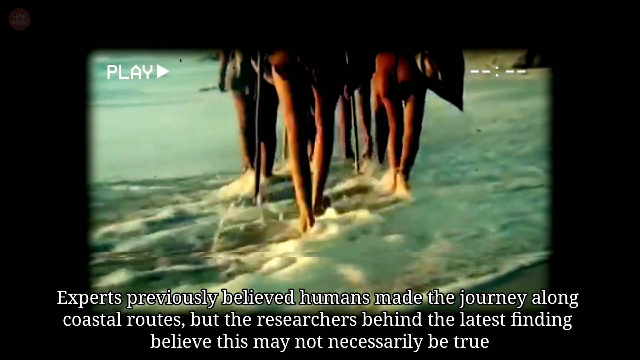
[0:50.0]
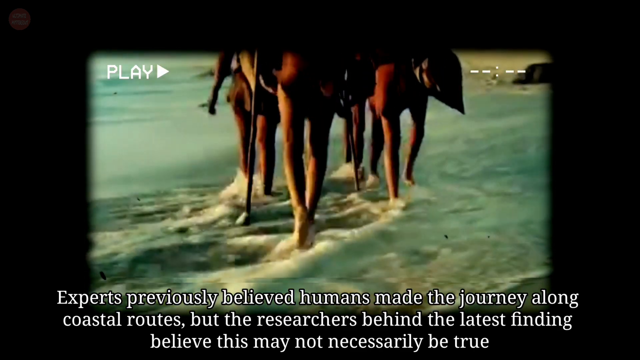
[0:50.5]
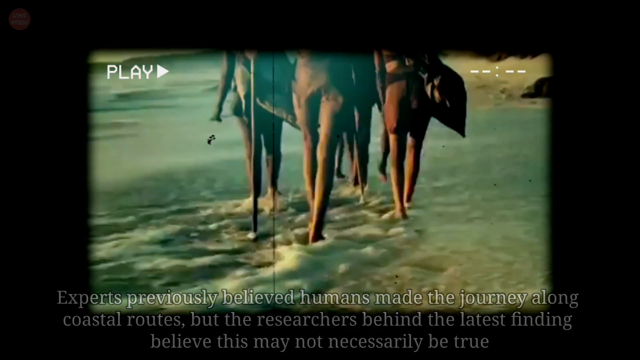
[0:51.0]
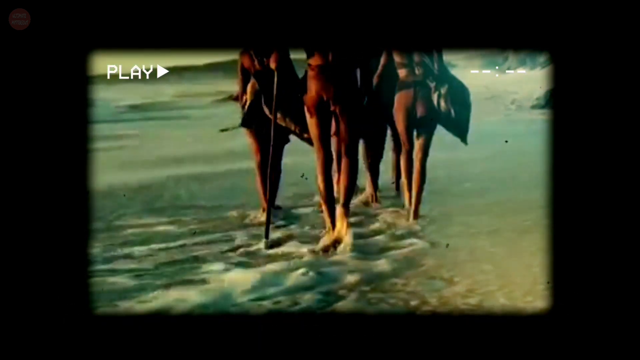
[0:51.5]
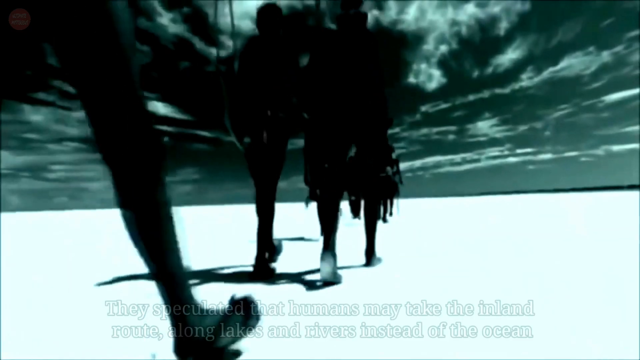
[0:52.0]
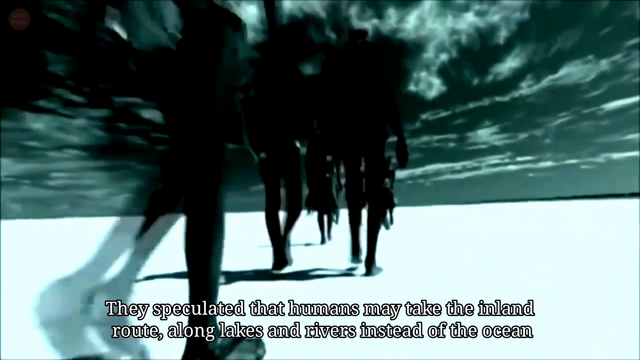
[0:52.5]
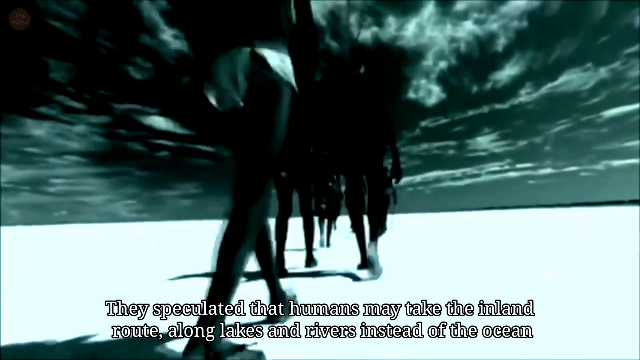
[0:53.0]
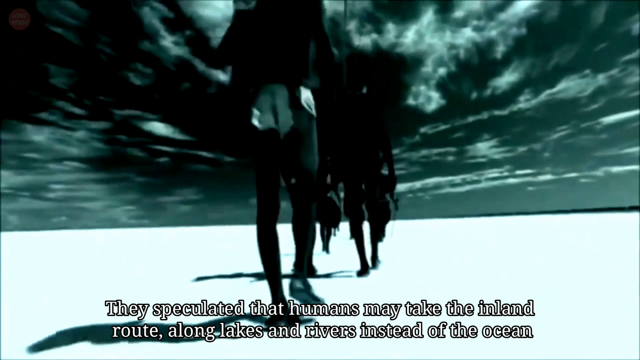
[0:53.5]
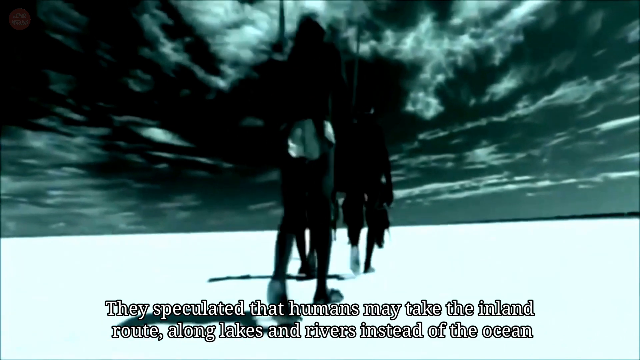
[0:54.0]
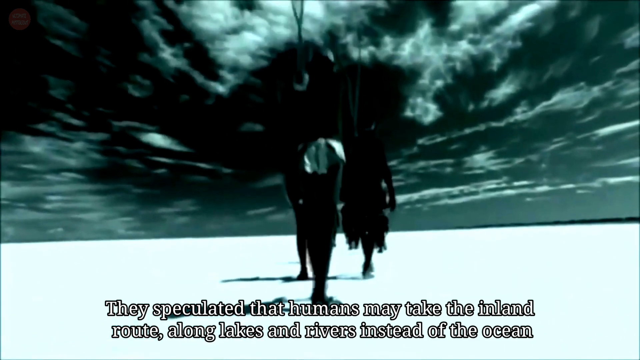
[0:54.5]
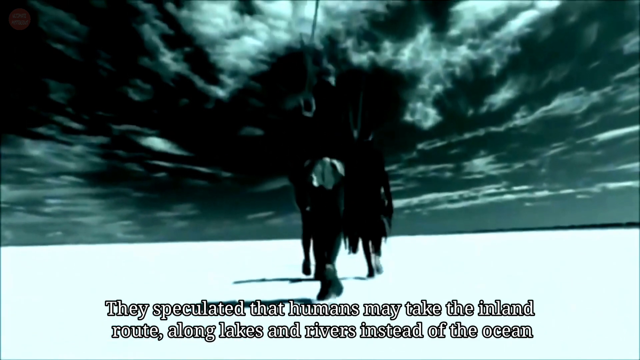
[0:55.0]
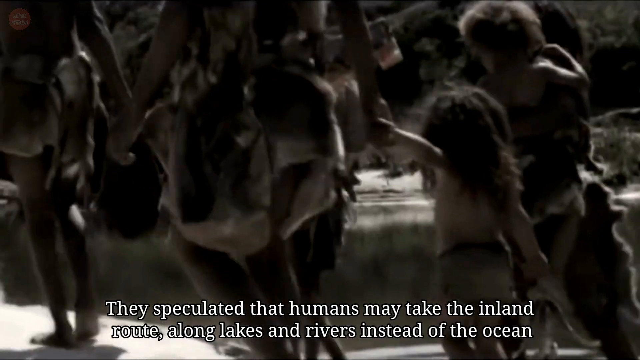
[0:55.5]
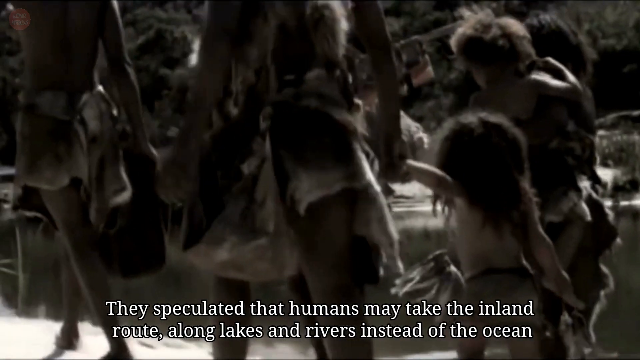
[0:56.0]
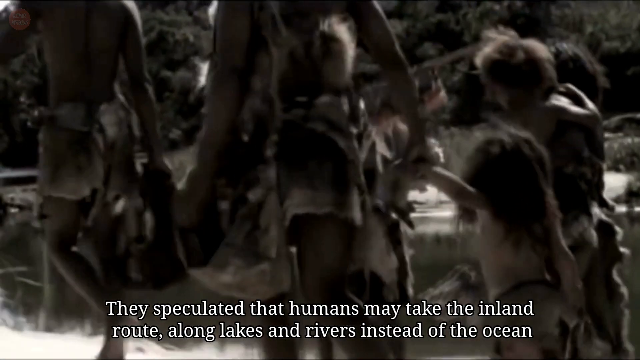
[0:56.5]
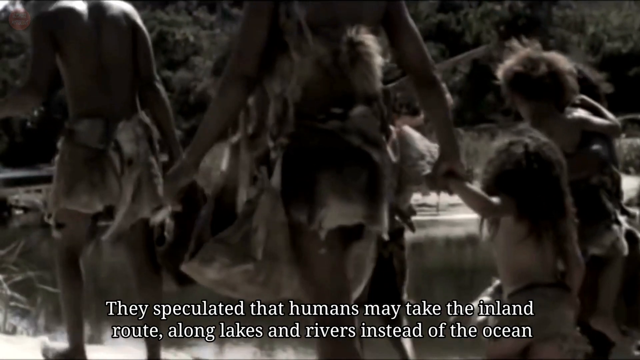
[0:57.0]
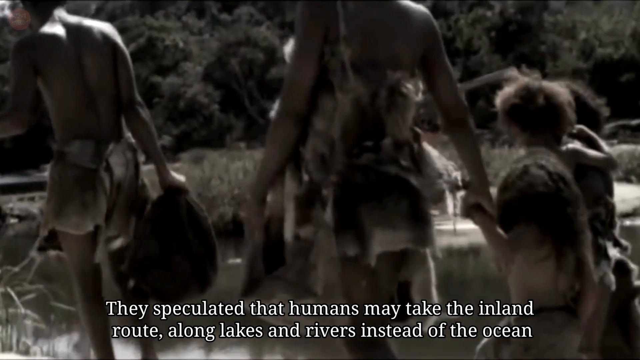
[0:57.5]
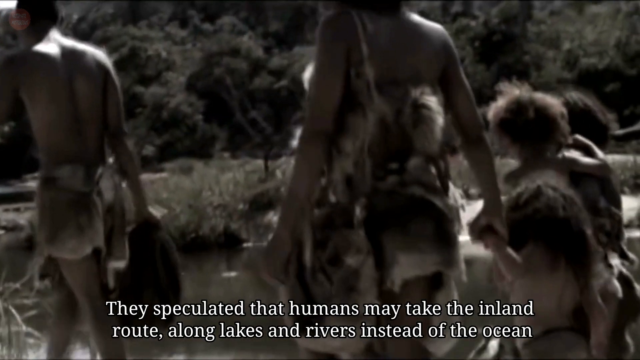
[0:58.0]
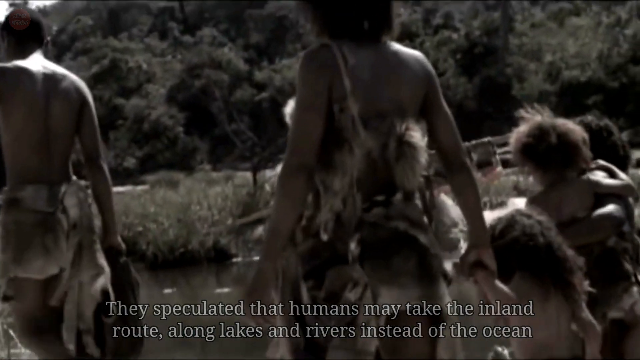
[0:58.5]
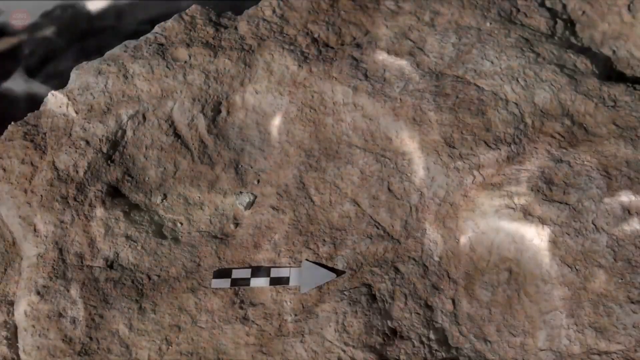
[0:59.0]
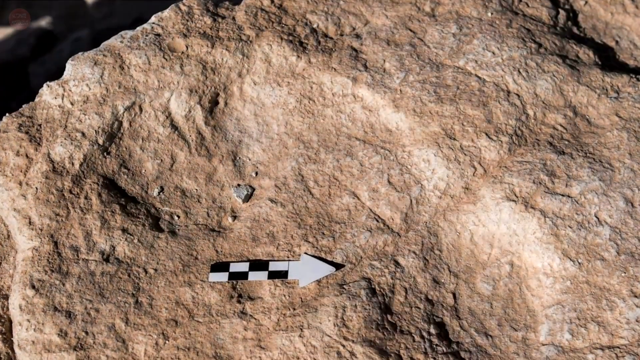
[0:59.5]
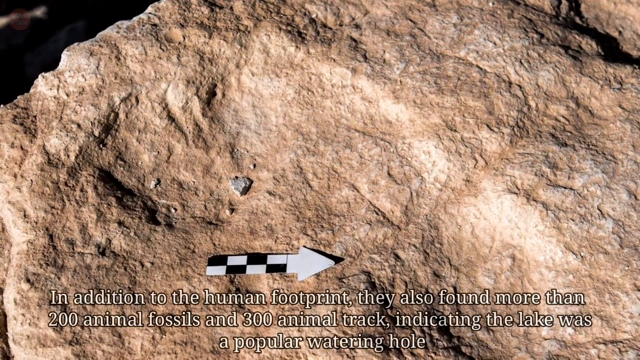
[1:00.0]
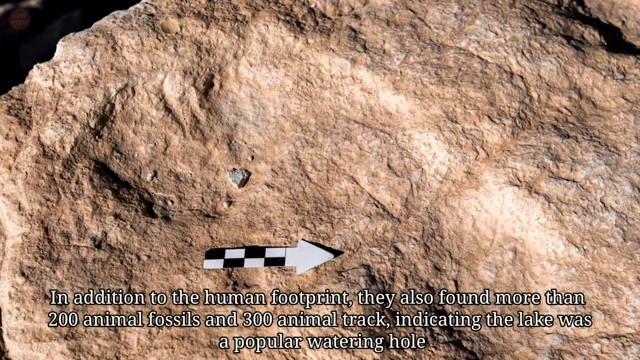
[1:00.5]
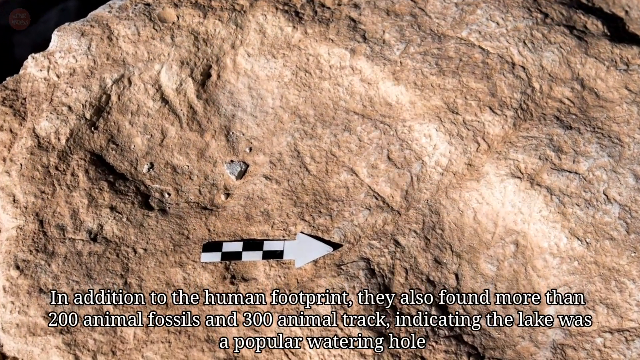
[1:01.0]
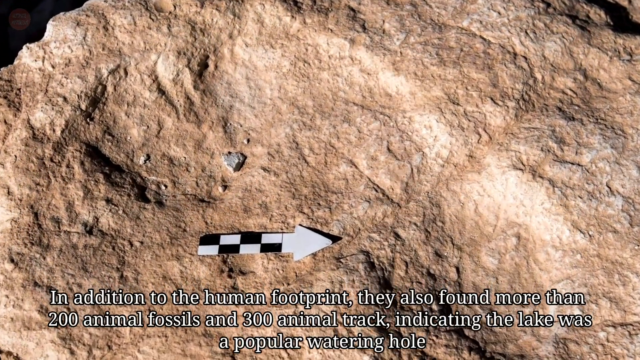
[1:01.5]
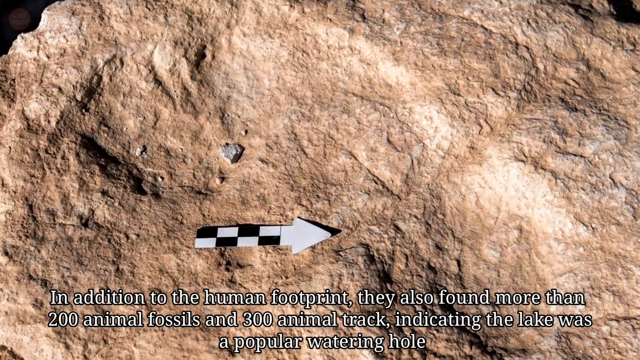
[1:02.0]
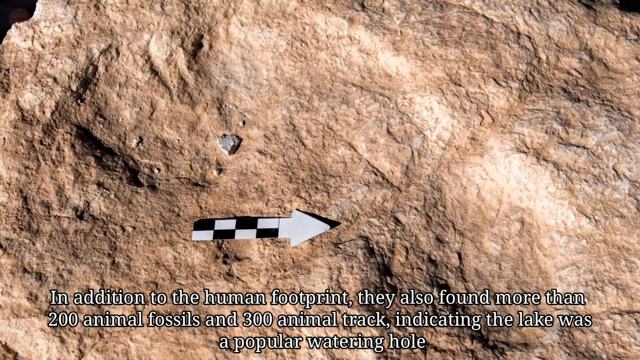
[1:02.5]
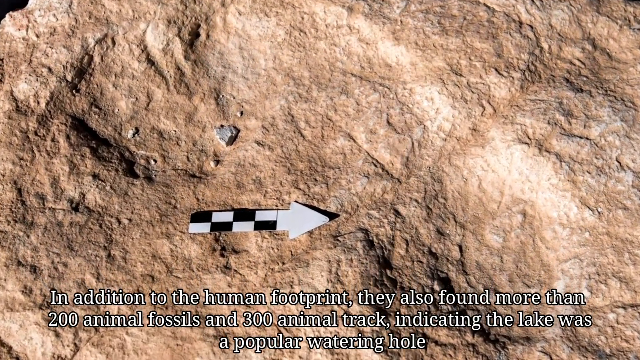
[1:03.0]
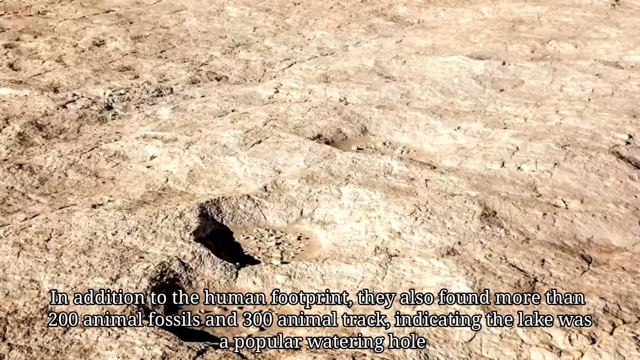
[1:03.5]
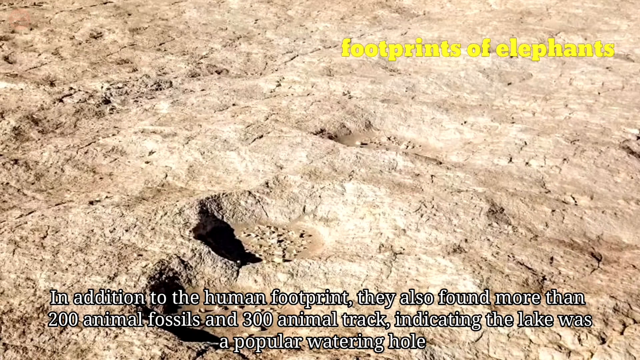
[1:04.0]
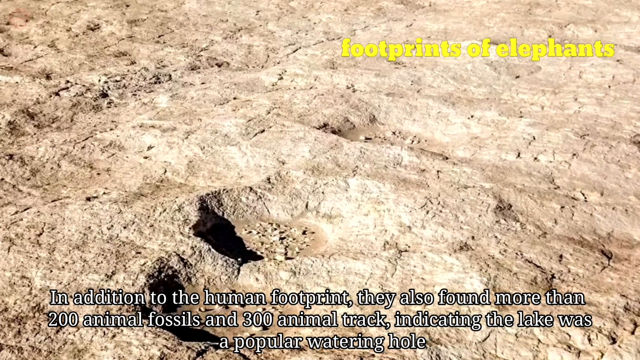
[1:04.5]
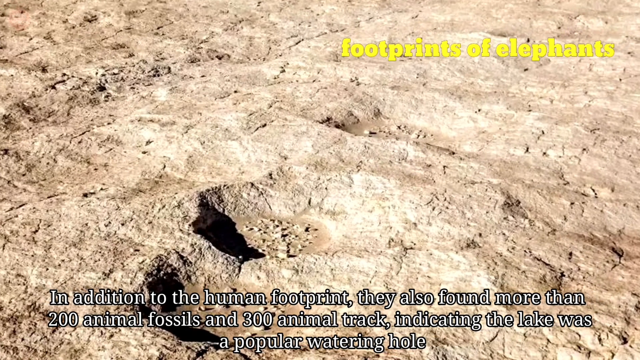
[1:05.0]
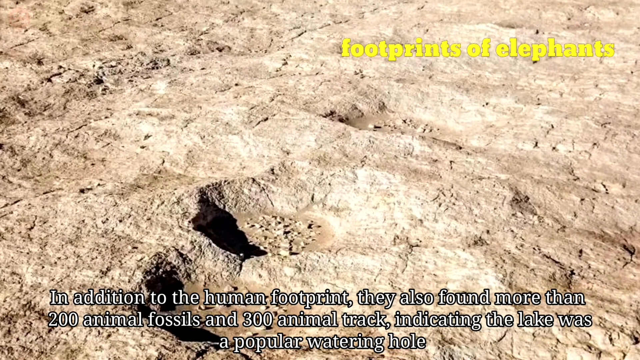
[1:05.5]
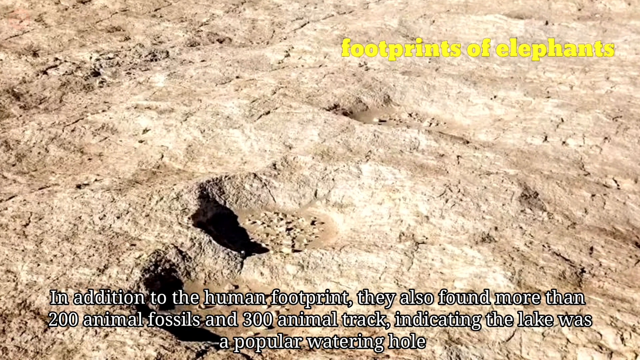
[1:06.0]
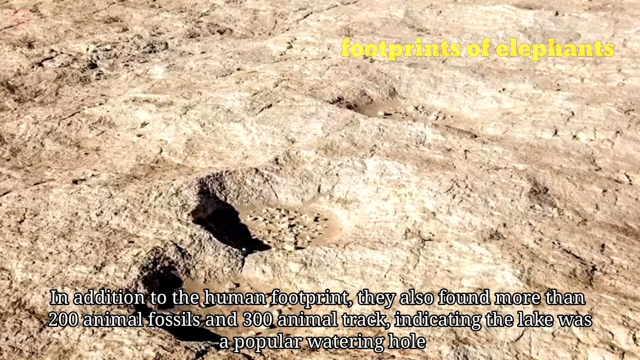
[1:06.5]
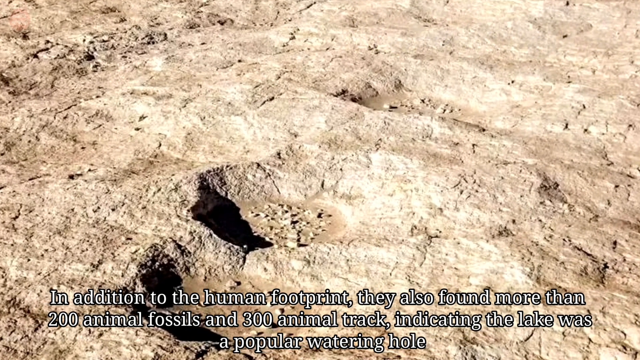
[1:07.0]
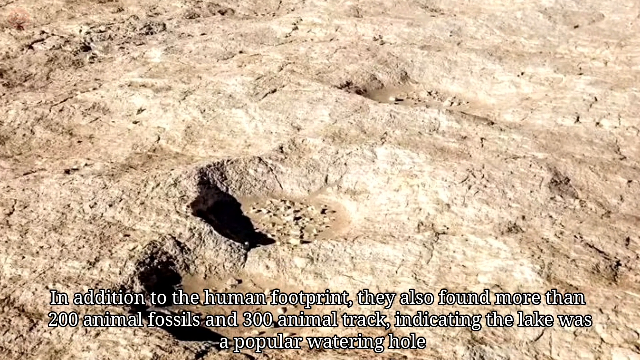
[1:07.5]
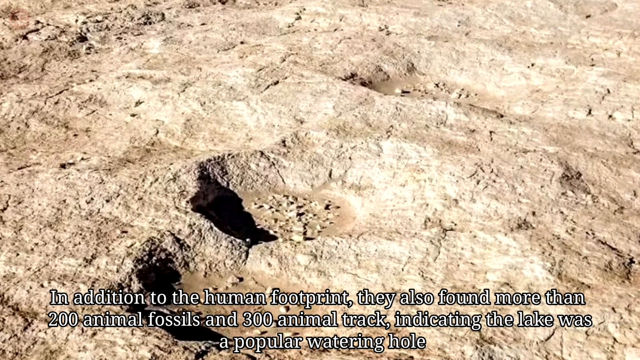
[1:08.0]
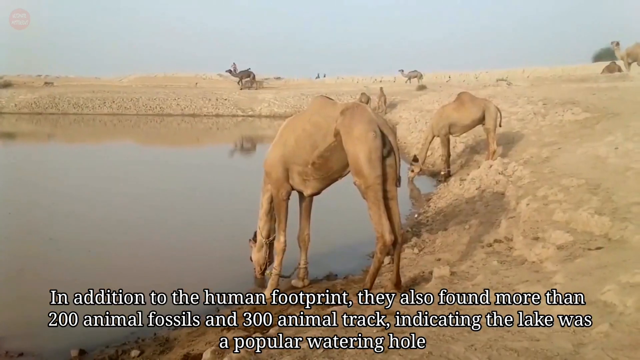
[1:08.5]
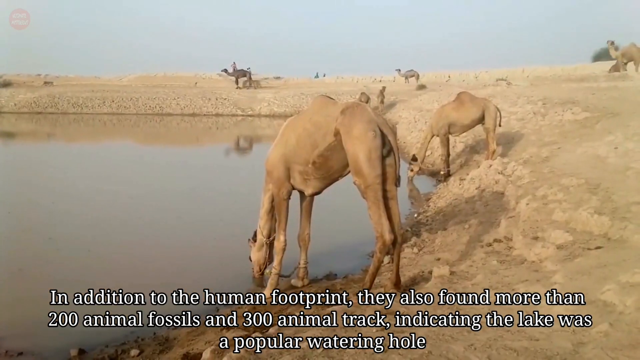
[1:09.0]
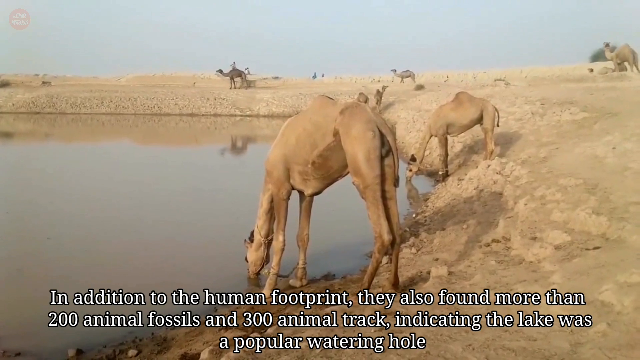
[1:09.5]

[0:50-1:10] The reenacted people appear again in the original setting, close to an inland lake, suggesting they may not have traveled along the coast. A picture shows a camel drinking from a lake. A black and white arrow appears on a rock, followed by elephant footprints, with yellow captions that say "footprints of elephant." Elephant footprints are shown briefly alongside the human ones. The images switch back and forth very quickly, and it is often unclear what the fossil images show or where they are from. The reenactment uses people with minimal clothing and bushy hair to represent prehistoric people traveling through the area, and camel images serve as more modern footage. There are few photos of the fossils.